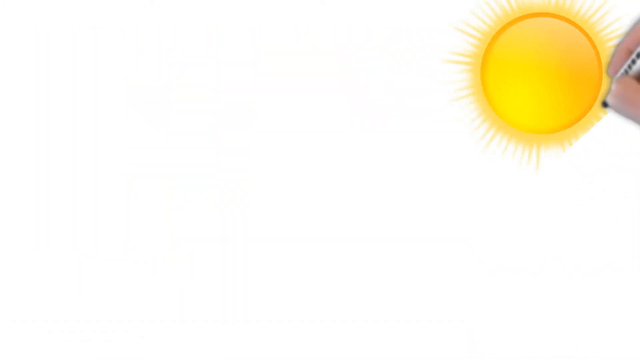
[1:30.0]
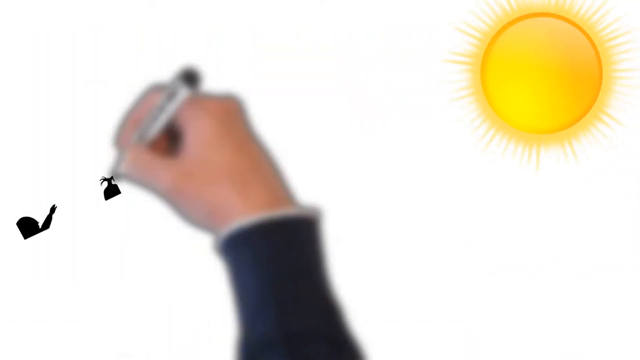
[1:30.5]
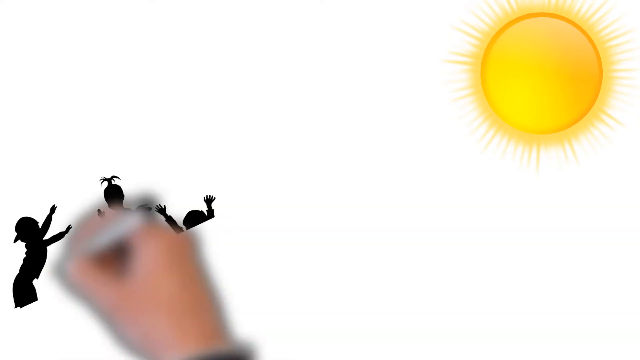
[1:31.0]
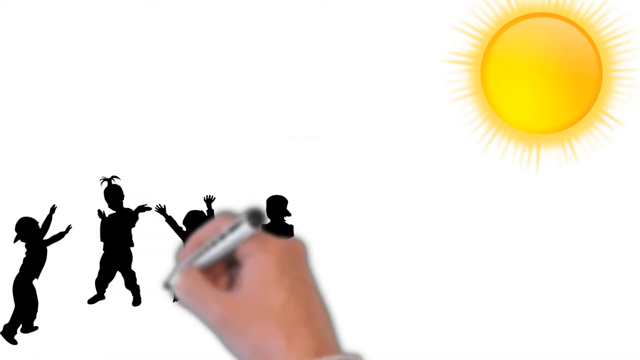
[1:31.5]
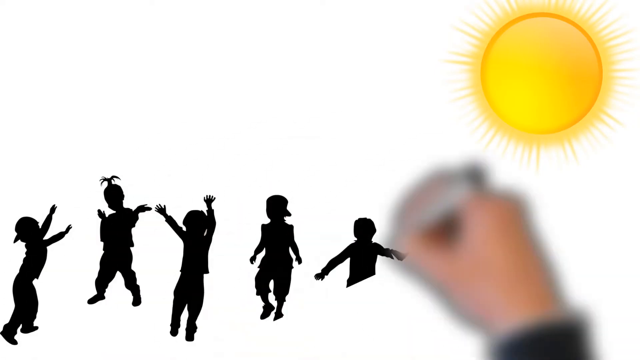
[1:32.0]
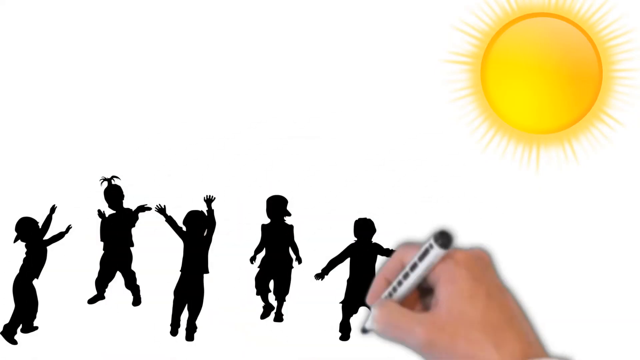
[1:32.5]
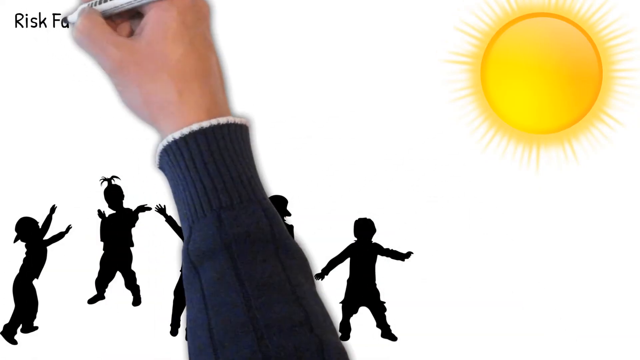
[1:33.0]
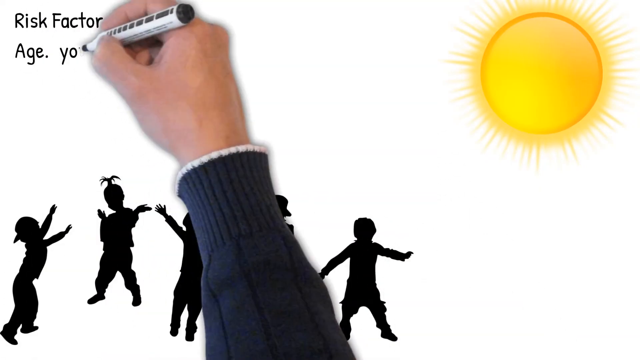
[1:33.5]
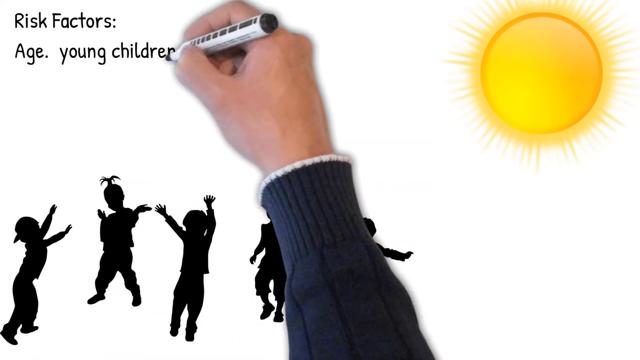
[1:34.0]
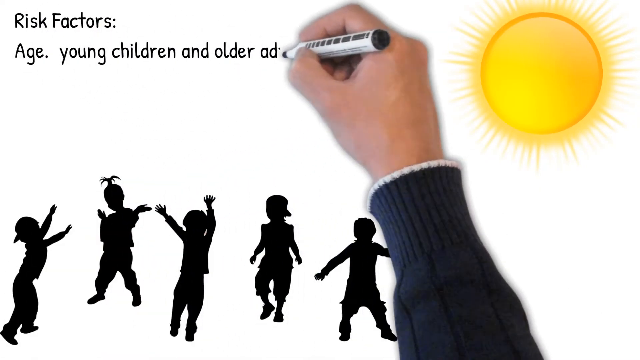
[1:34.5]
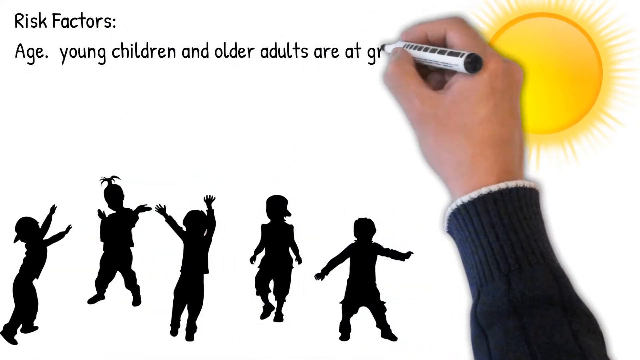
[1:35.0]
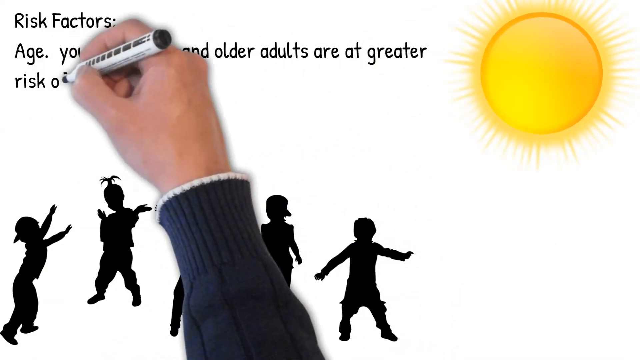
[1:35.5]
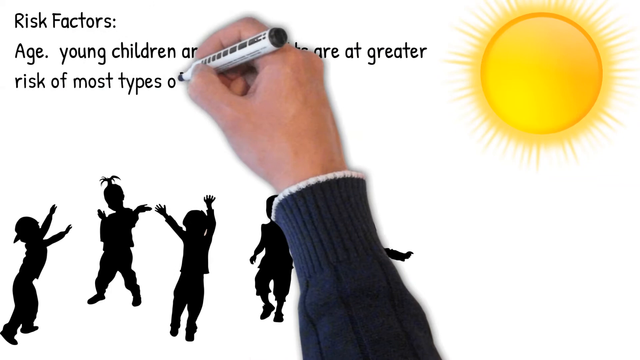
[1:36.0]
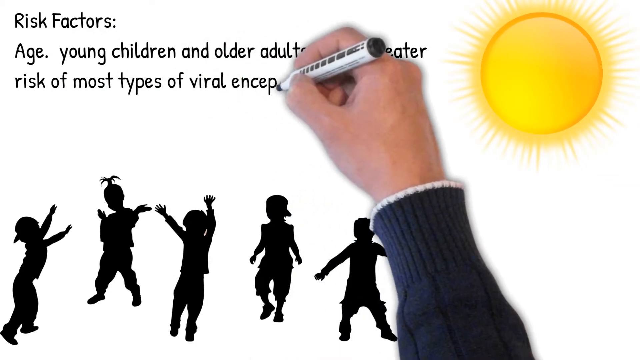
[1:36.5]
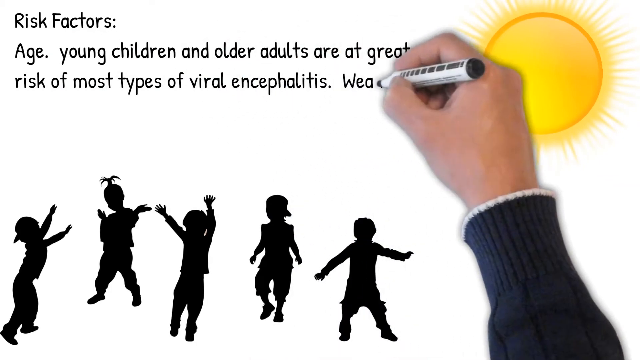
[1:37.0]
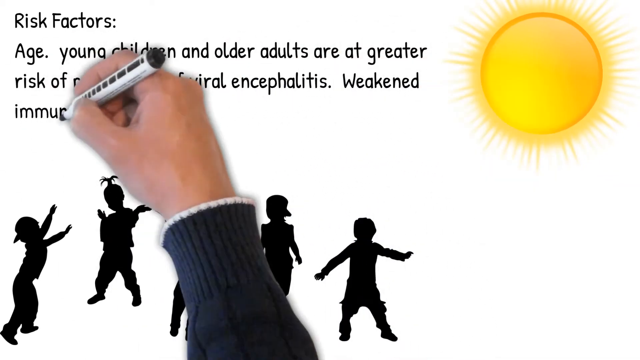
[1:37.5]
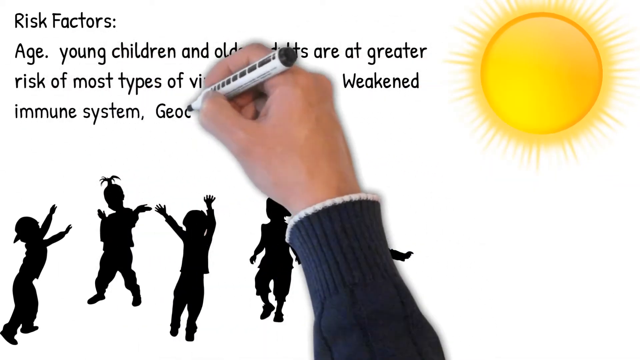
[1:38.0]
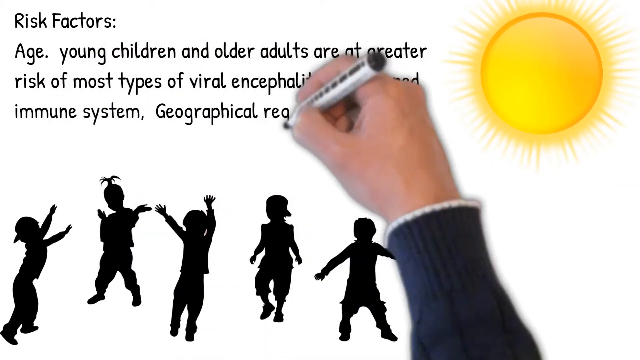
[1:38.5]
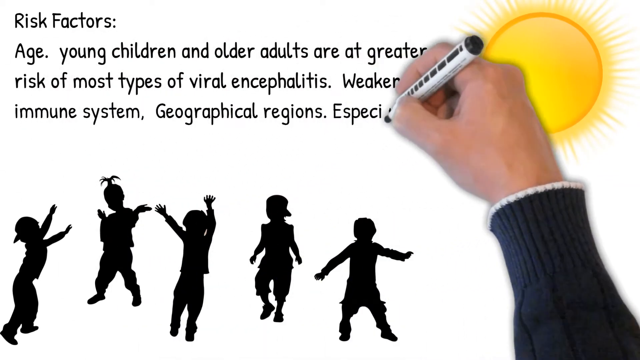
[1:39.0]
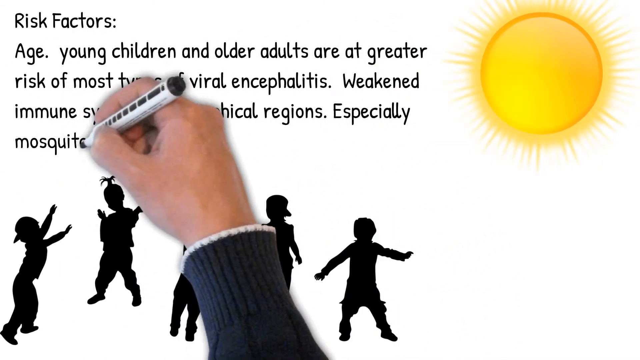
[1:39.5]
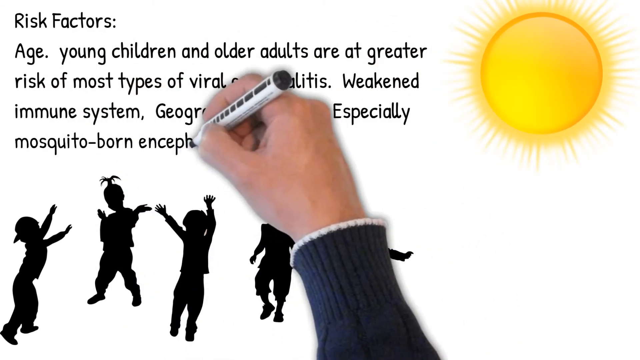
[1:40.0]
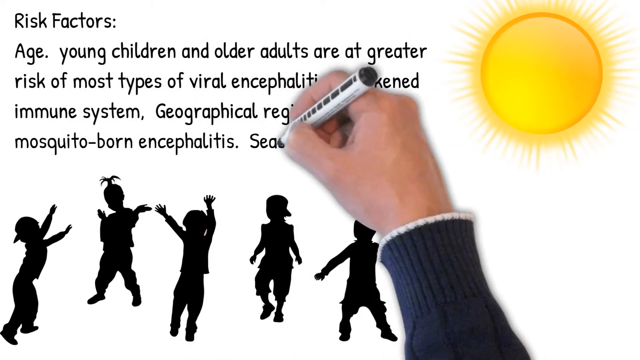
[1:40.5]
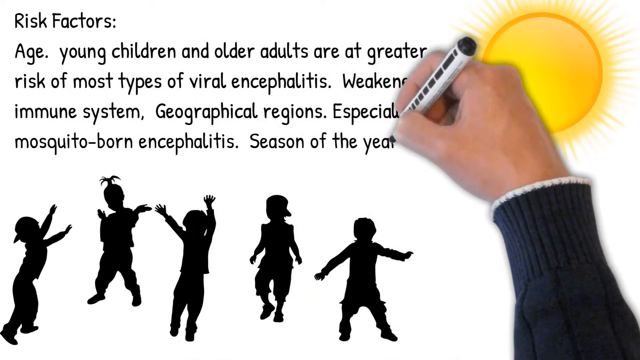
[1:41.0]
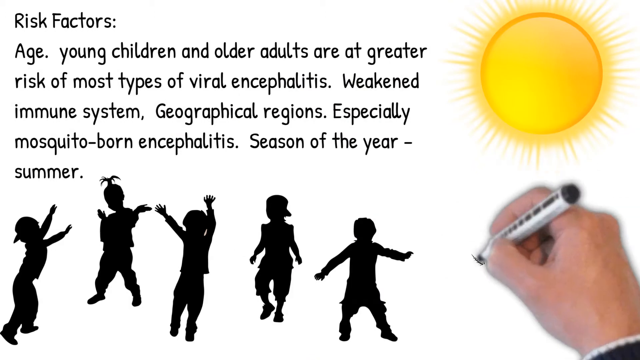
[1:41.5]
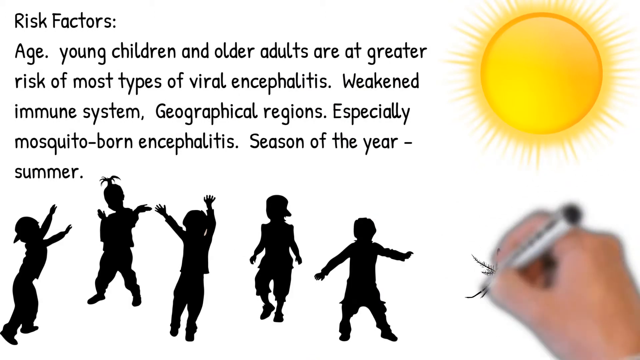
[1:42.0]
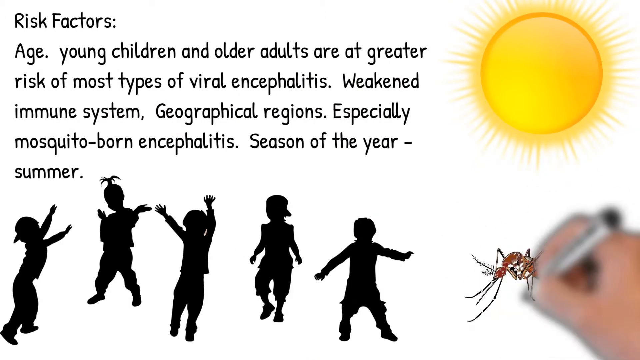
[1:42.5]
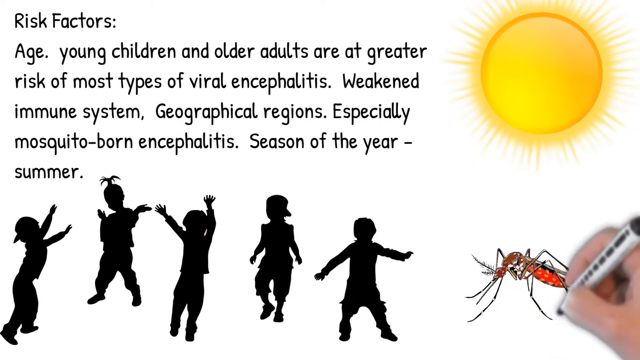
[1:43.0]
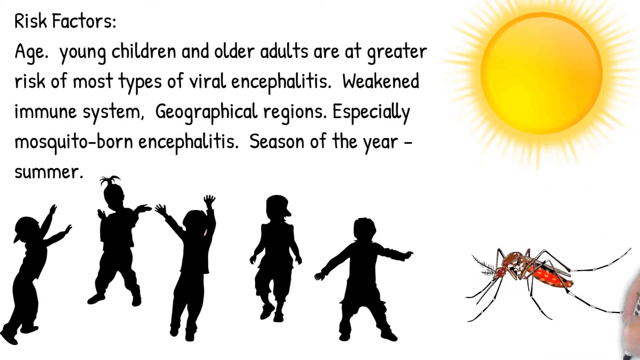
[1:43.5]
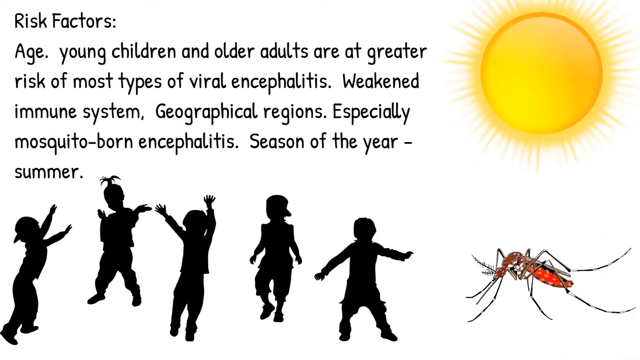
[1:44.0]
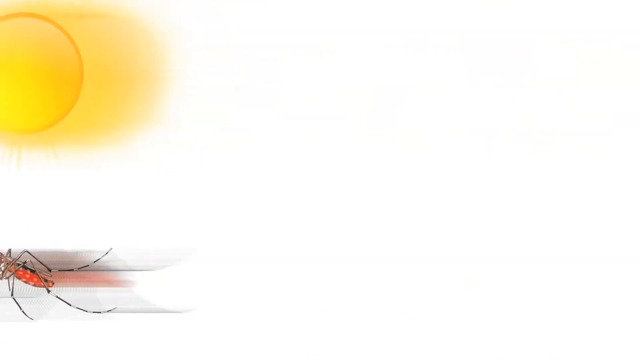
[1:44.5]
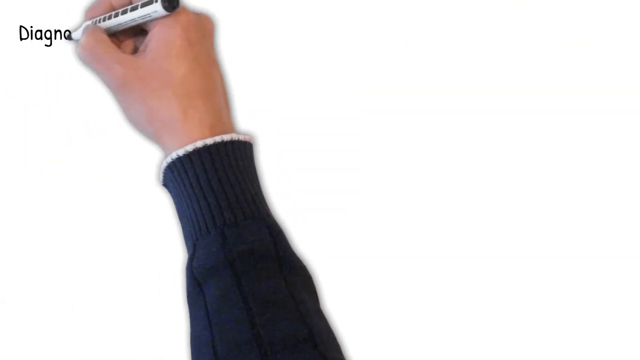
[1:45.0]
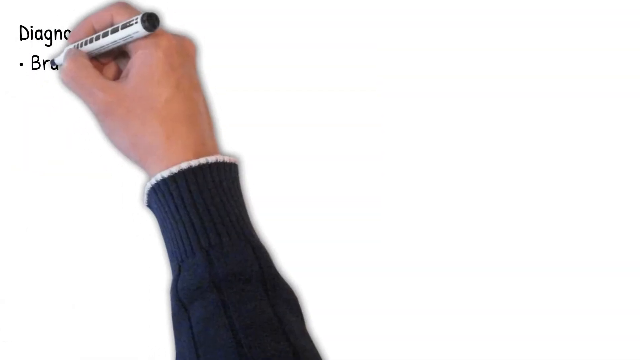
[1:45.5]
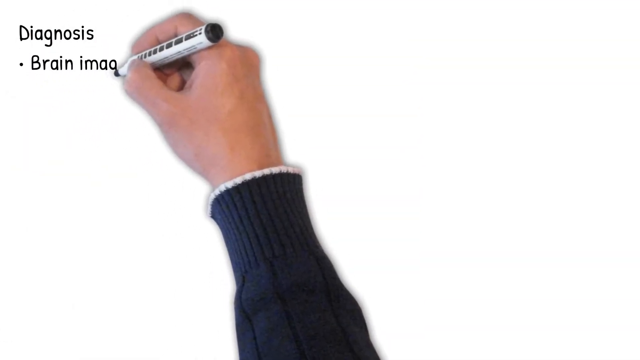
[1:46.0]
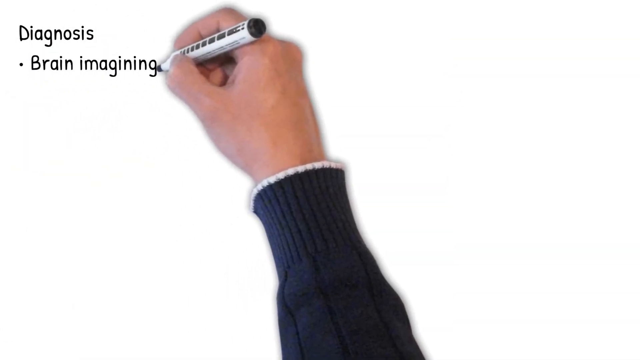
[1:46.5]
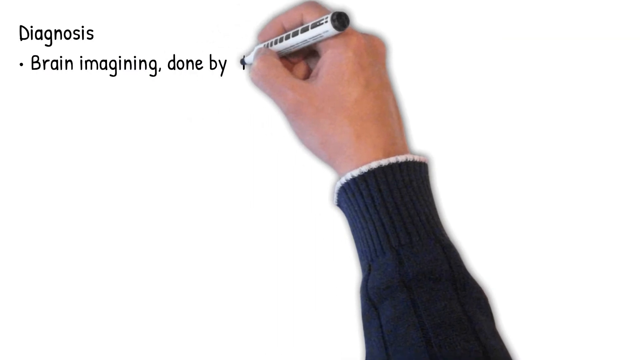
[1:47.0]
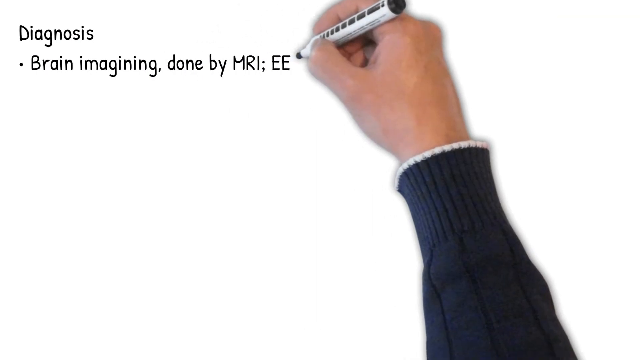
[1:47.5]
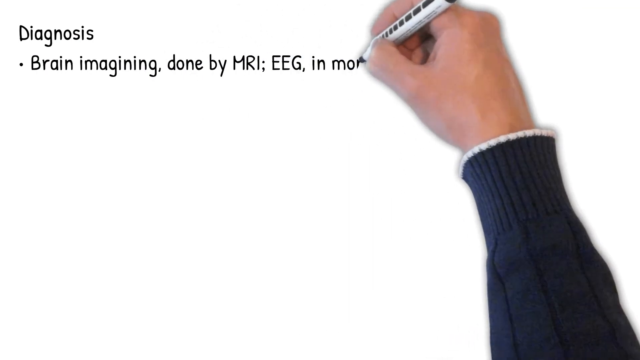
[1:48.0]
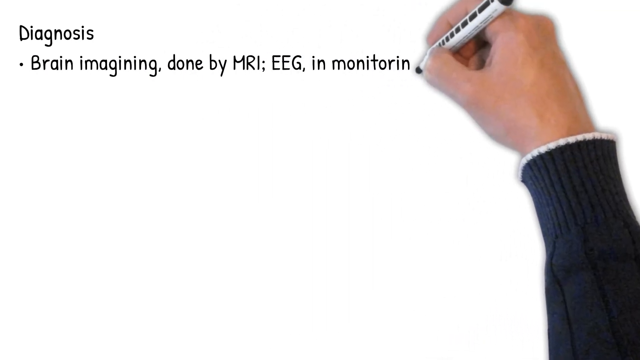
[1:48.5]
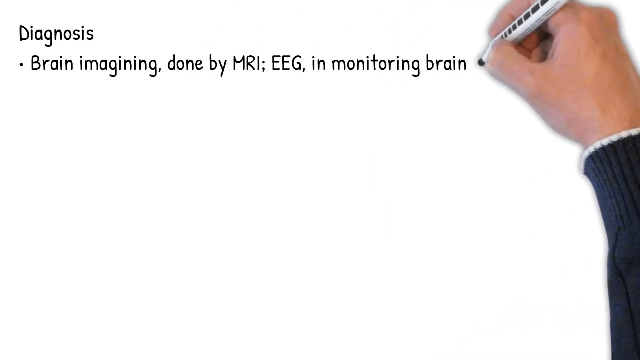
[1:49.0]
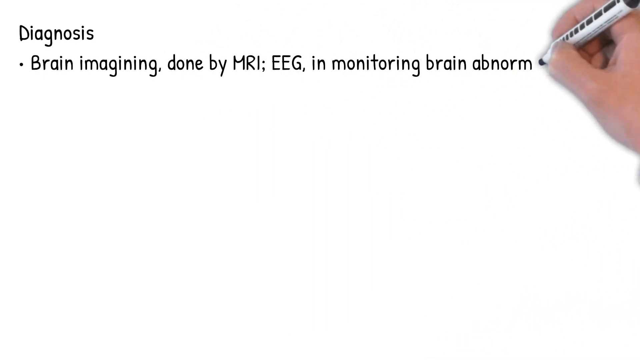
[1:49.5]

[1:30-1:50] The plain white page has the yellow sun drawn in the top right corner. At the bottom, the marker sketches shadows of five kids playing. The text says "risk factors", listing age, with young children and older adults at greater risk of most types of viral encephalitis; a weakened immune system; geographical region, especially for mosquito-borne encephalitis; and the season of the year, summer. In the bottom right corner, a picture of a mosquito is sketched. On the next page, the text says "the diagnosis for encephalitis is brain imaging", usually an MRI, and an EEG to monitor abnormal brain activity.